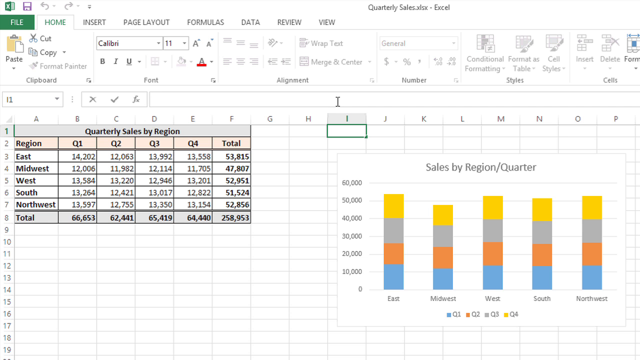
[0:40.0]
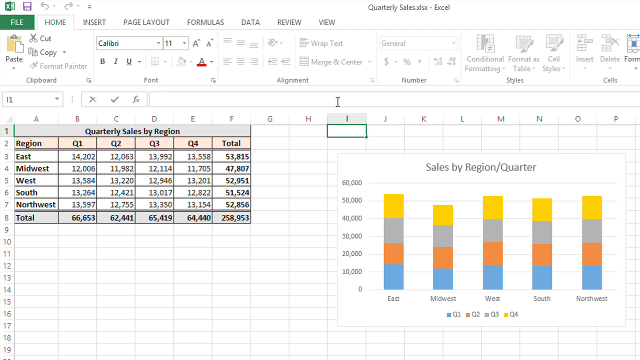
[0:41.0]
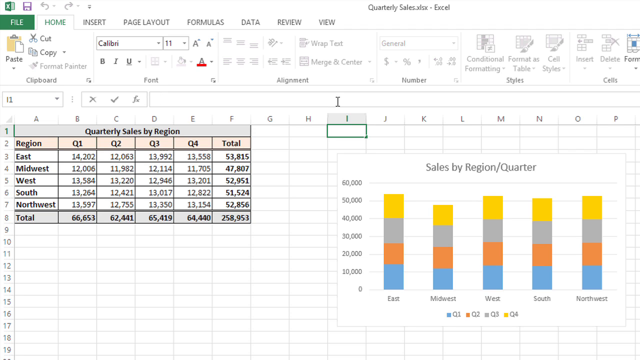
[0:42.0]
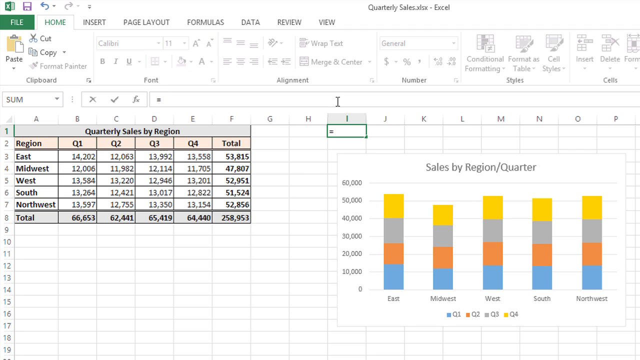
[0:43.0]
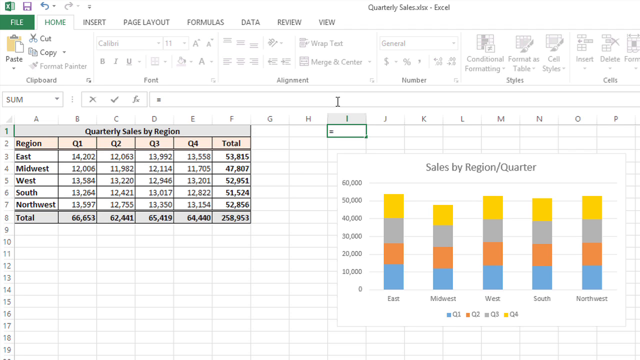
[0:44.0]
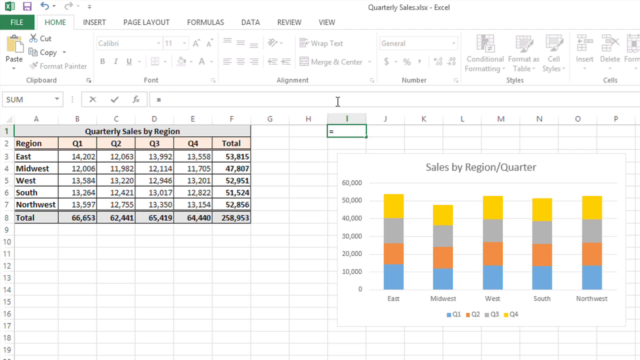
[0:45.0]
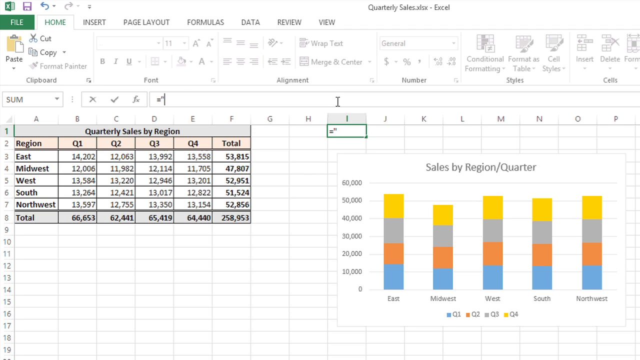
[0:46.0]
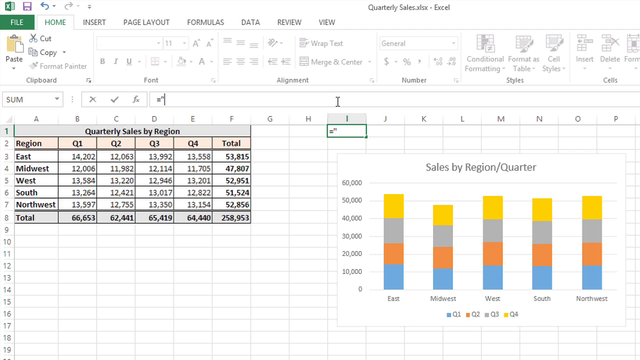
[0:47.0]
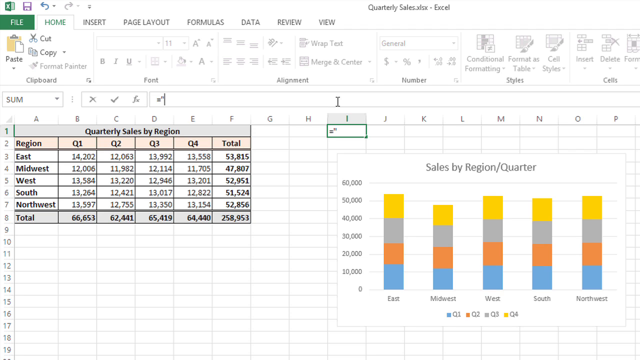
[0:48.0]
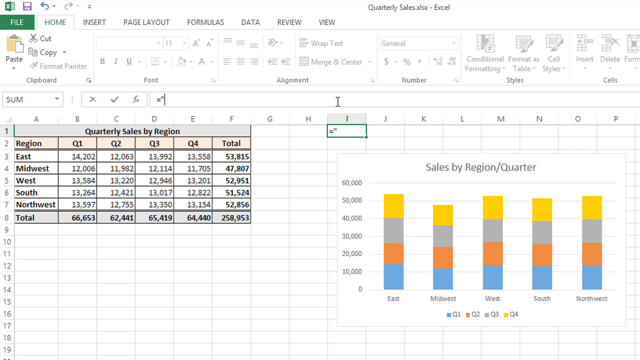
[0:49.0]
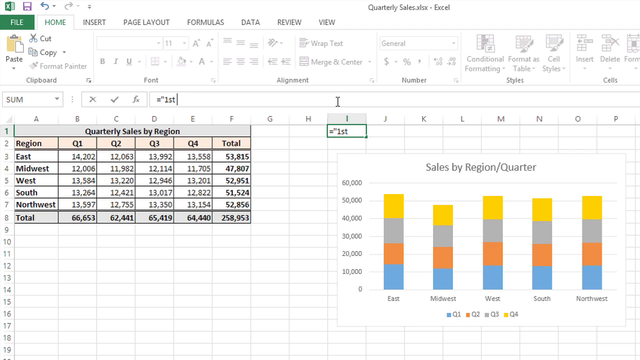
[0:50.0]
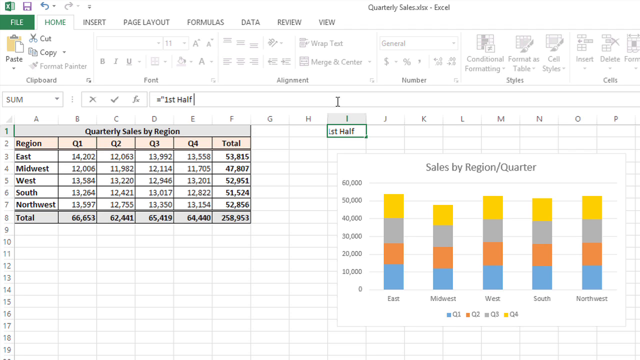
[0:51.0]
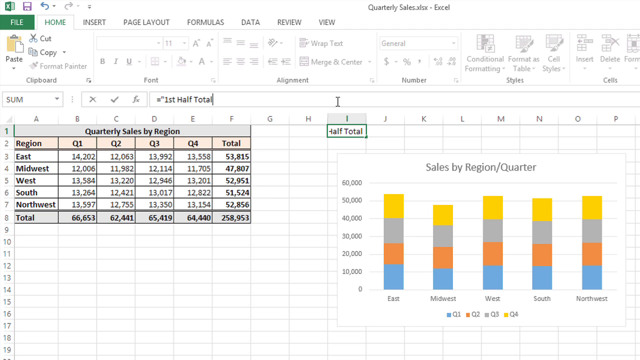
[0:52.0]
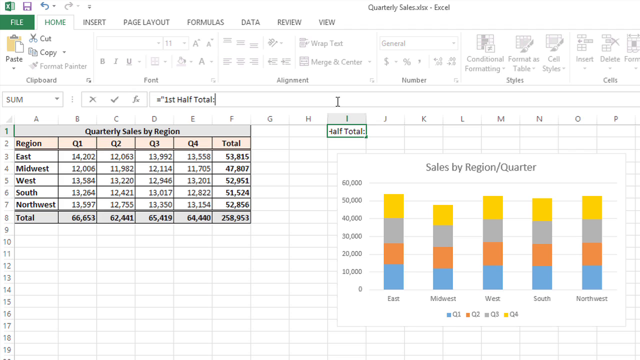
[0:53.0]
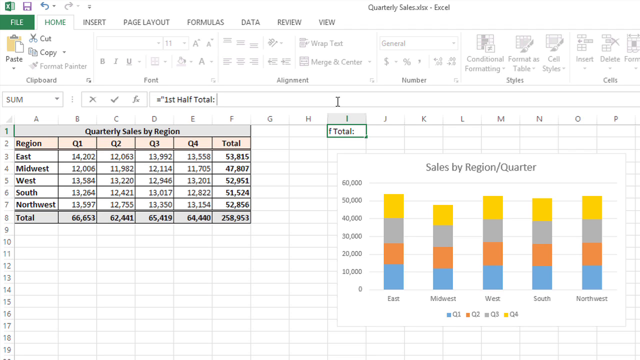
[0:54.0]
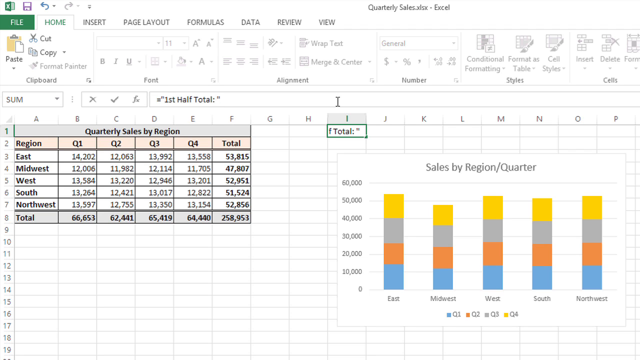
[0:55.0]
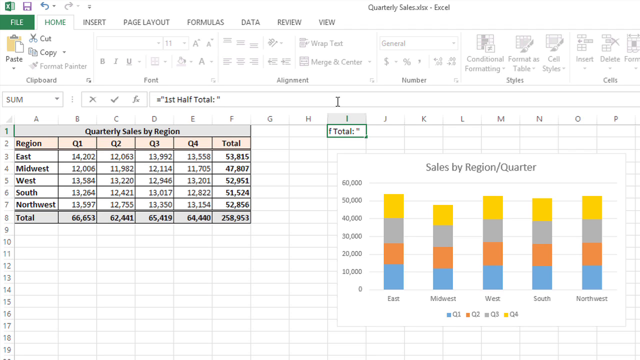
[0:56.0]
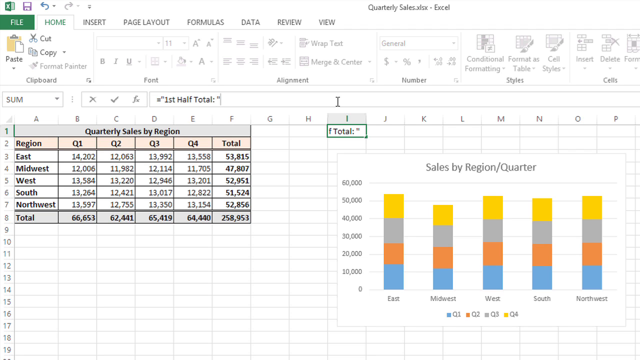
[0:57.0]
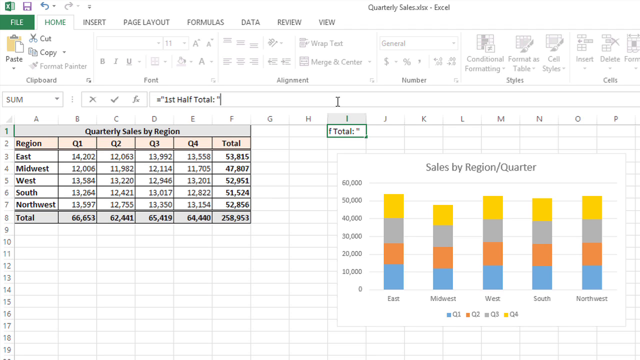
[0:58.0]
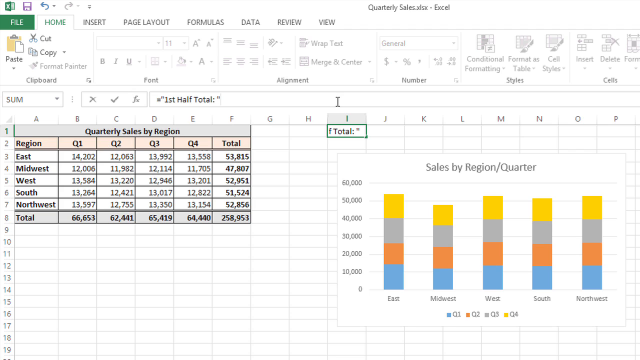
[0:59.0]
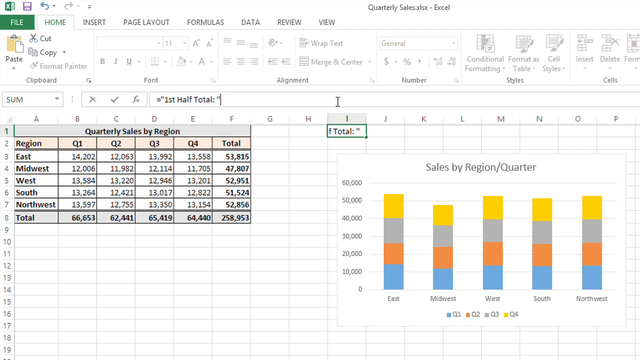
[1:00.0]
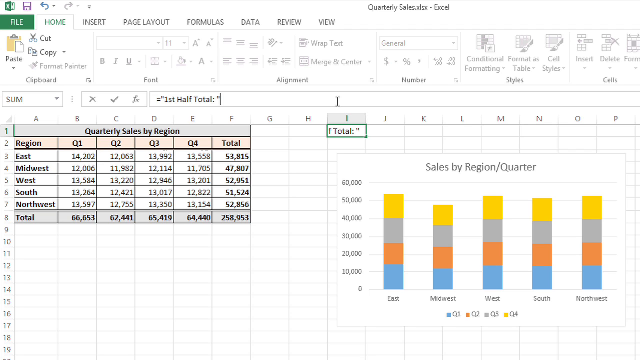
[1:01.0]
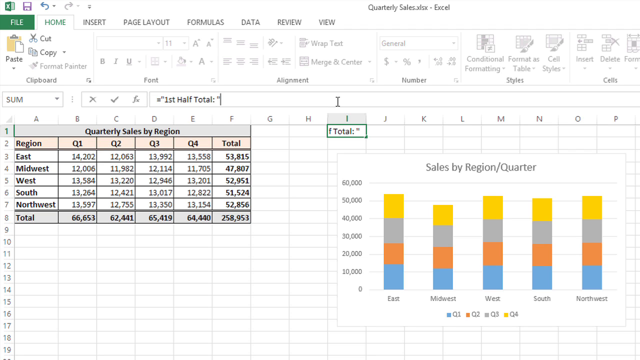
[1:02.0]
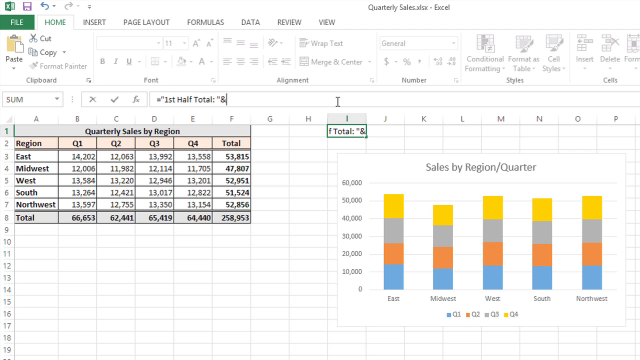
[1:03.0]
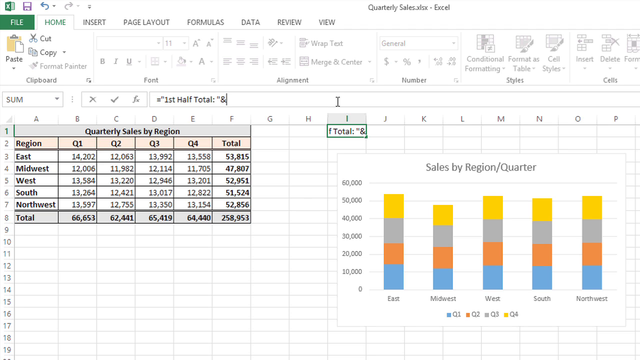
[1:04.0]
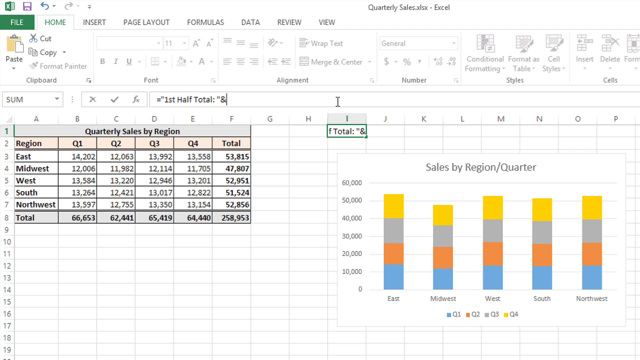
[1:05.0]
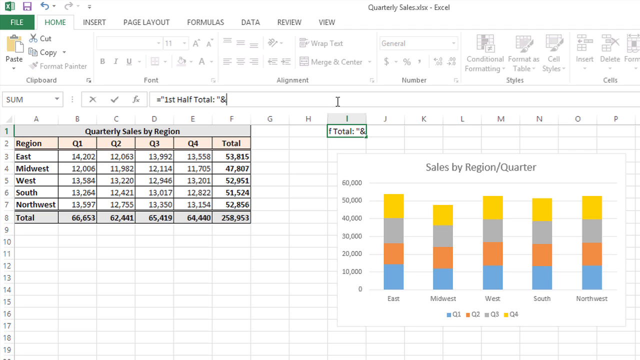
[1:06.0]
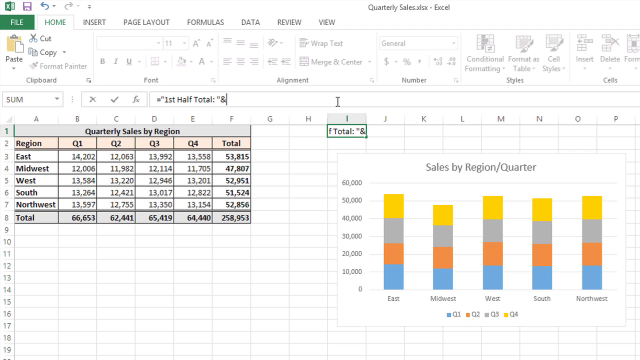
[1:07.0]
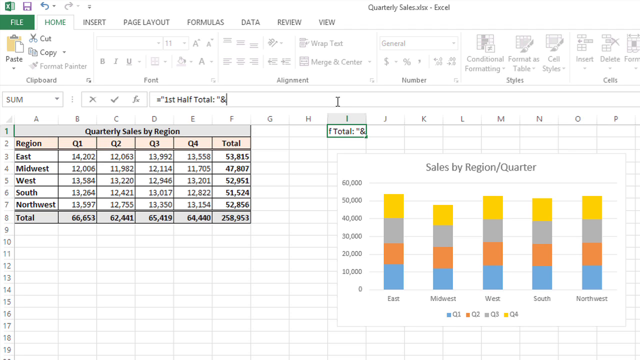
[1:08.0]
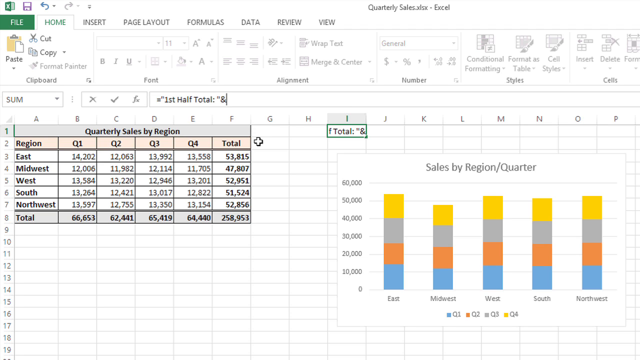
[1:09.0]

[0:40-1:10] With the I tab highlighted, a small bar for typing formulas is visible. An equal sign has been entered, followed by something too small to see, then "first half total" with dots and a quotation mark. At the top, a drop-down menu has changed to "sum" from something else, and next to the bar there is an X, a check mark and "FX". As text is typed into the bar, it also appears in column 2 of the I tab. Microsoft Excel is on the Home tab, and the other tabs shown are Insert, Page Layout, Formulas, Data, Review and View. Most of the current tab is grayed out, but Paste, Cut and Copy can still be selected.